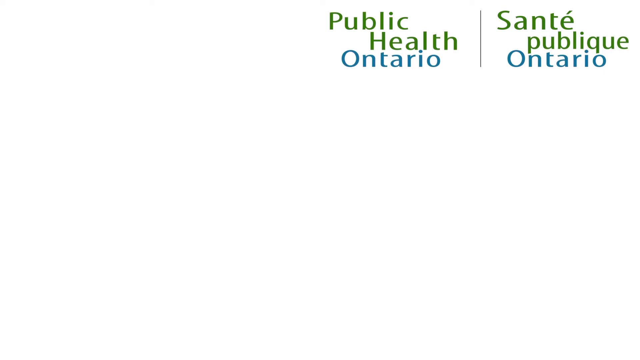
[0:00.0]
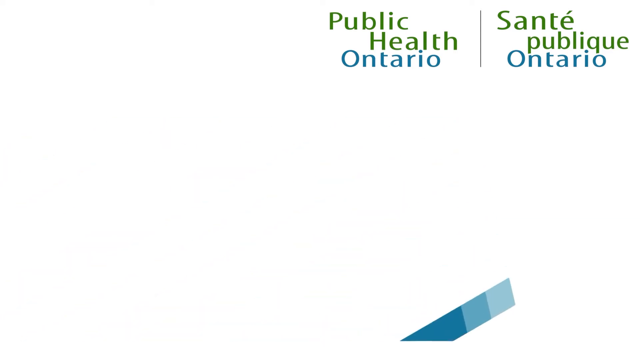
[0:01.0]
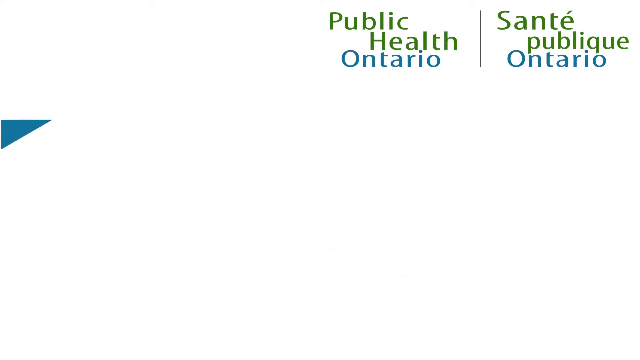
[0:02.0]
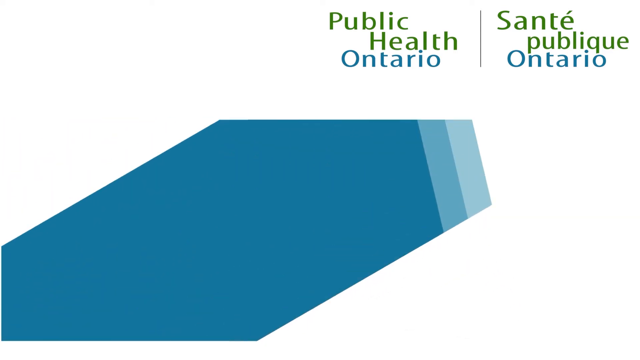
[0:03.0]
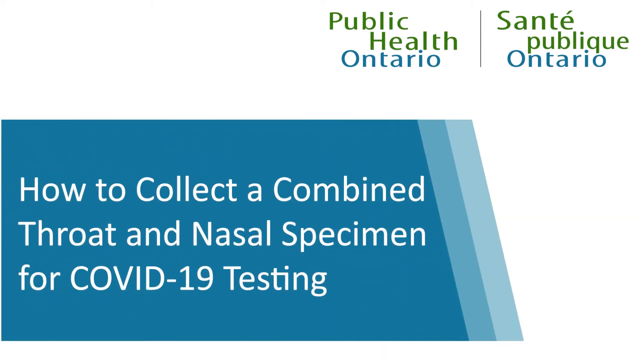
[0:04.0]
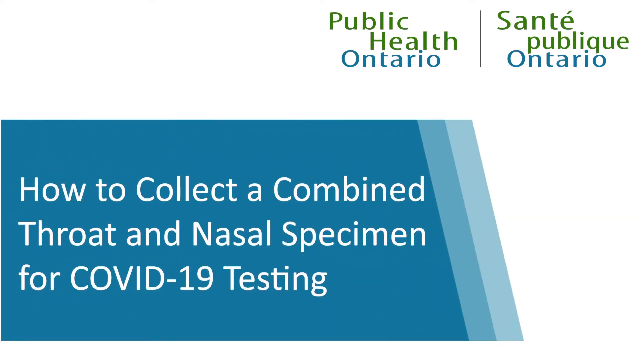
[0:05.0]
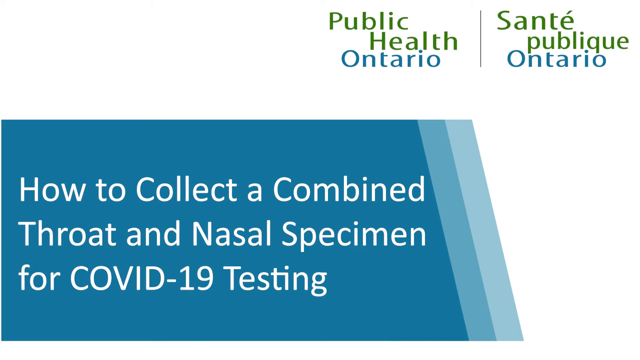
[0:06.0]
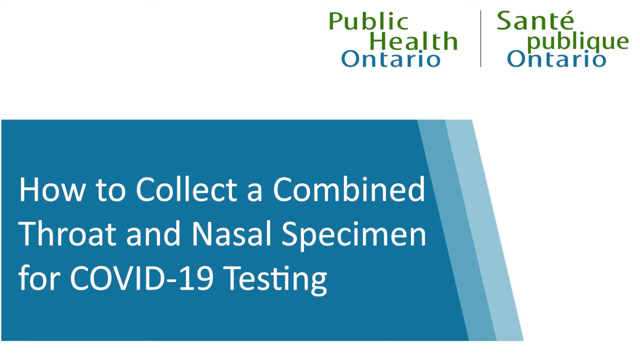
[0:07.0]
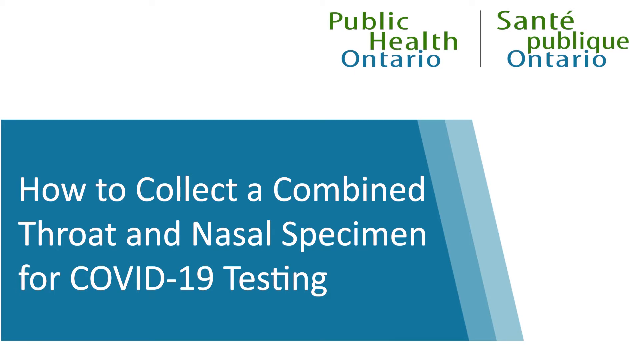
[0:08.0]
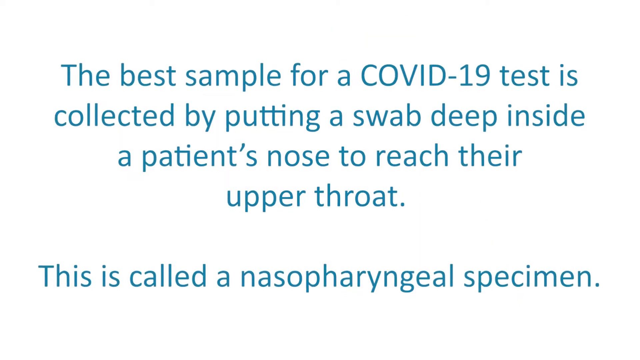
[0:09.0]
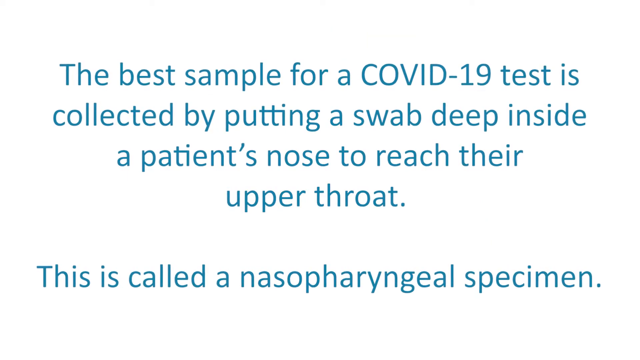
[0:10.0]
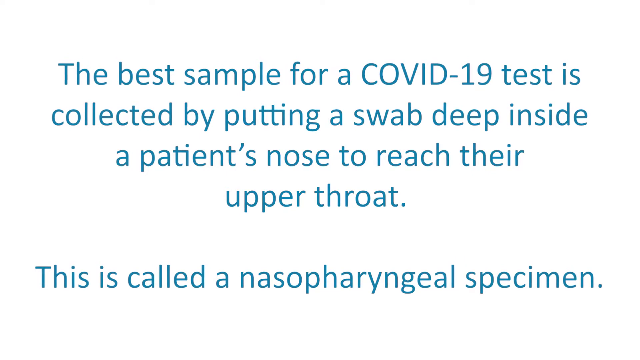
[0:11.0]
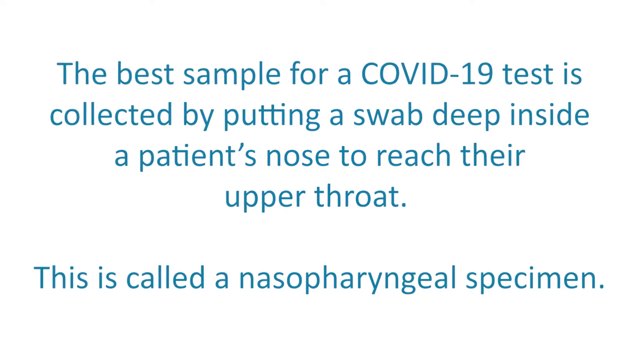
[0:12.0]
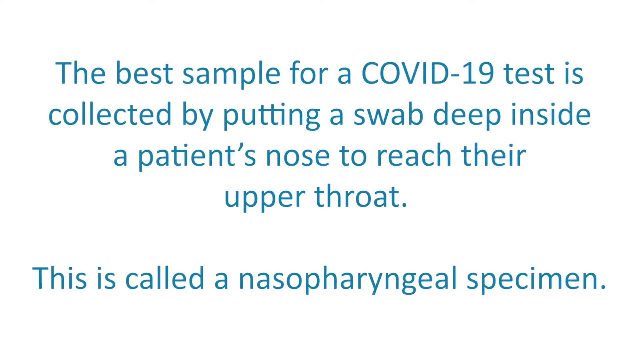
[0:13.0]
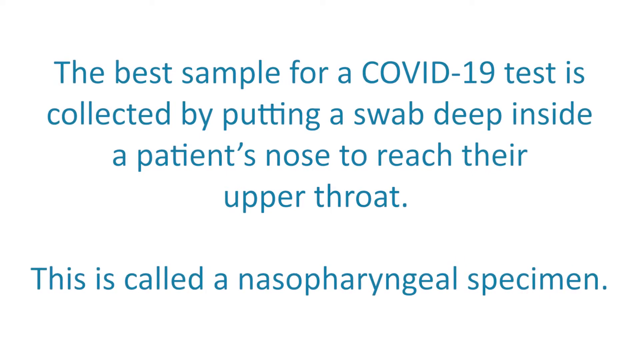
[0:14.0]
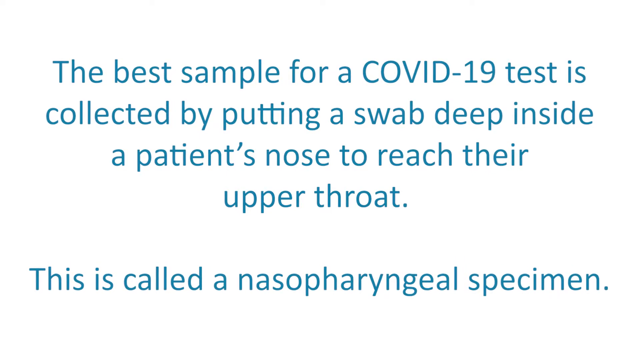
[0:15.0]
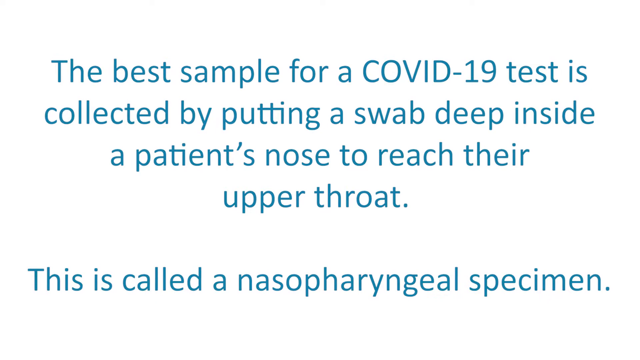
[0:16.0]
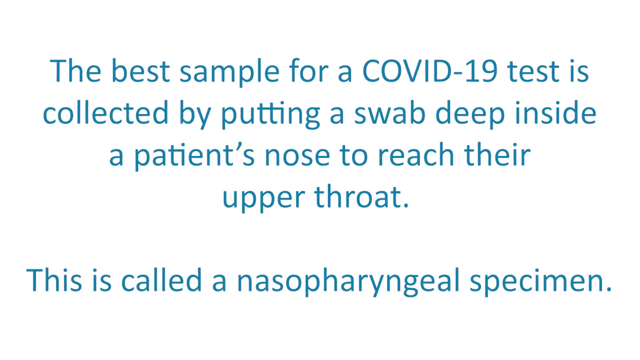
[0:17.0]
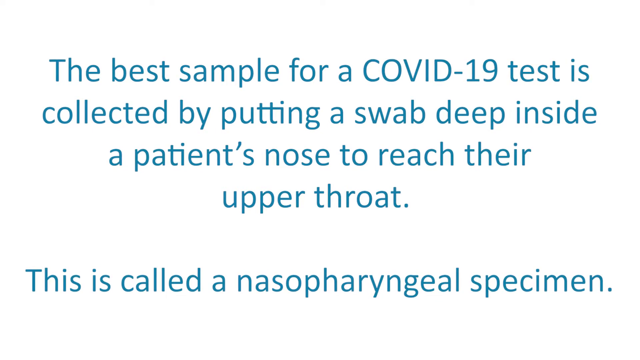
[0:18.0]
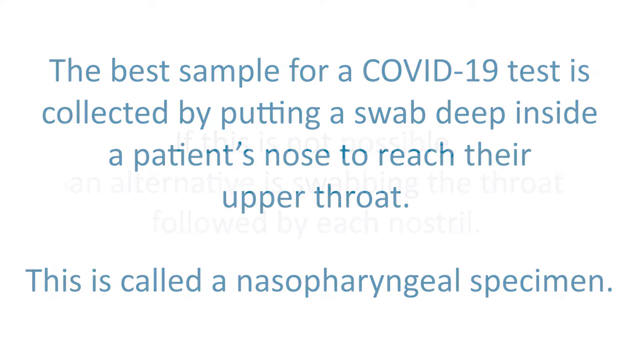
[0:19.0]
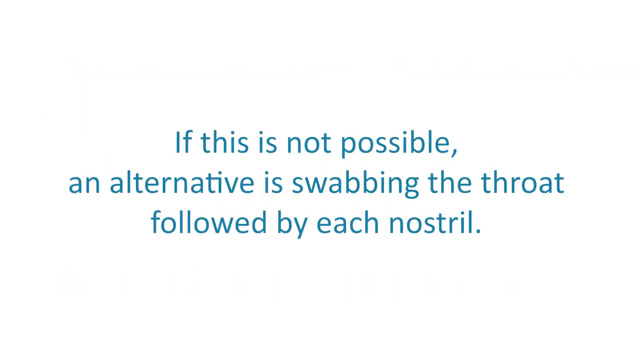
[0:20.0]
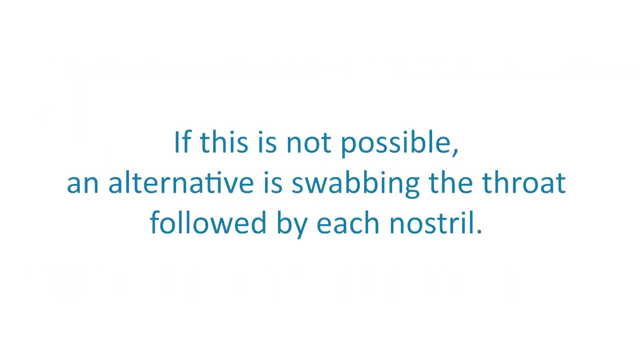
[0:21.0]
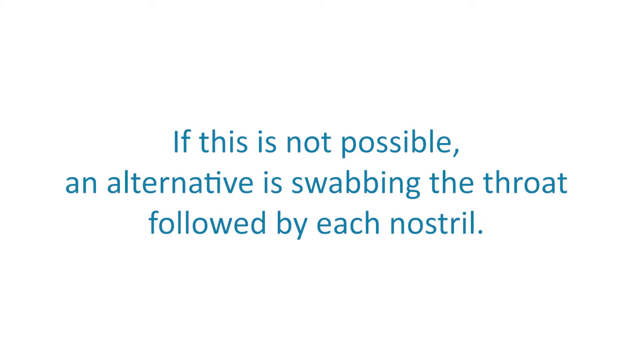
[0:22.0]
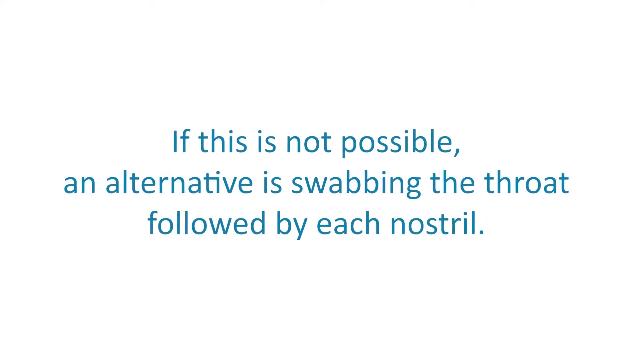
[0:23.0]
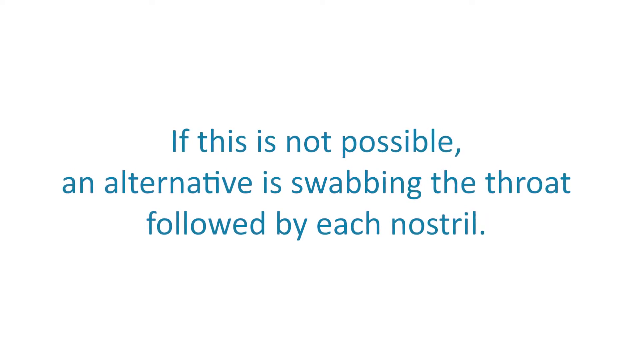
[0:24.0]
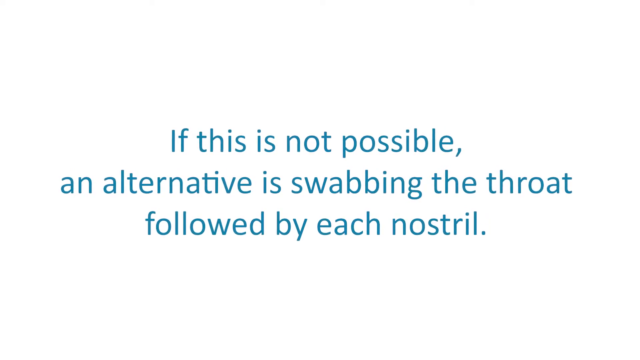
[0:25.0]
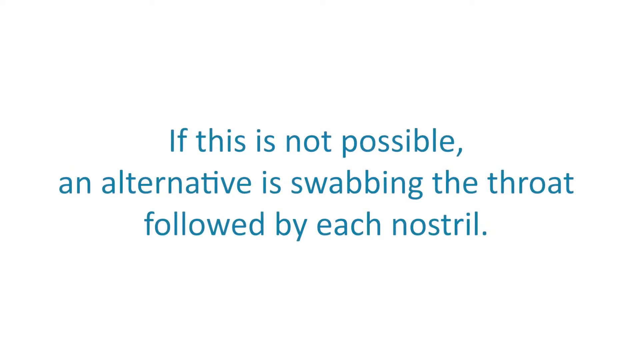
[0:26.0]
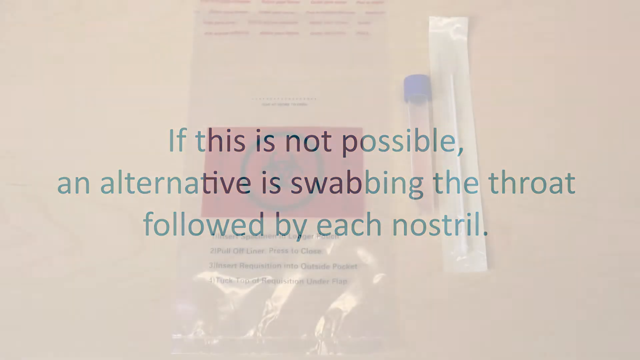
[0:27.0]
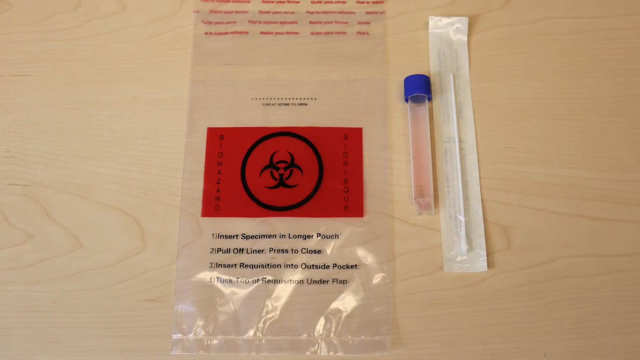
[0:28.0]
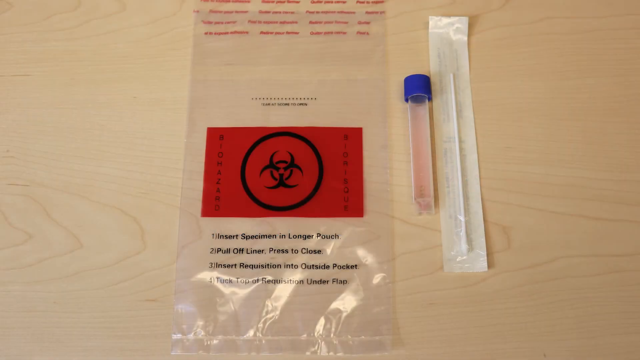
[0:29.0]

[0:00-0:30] The video opens with a logo in the upper right-hand corner that reads "Public Health Ontario," then a line in the middle, then "Santé Publique Ontario," in another language. An animation of blue lines leads to a light blue background with the text "How to collect a combined throat and nasal specimen for COVID-19 testing." Next, blue words on a white background read "the best sample for a COVID-19 test is collected by putting a swab deep inside a patient's nose to reach their upper throat. This is called a nasopharyngeal specimen." Another screen, also with blue letters on a white background, reads "if this is not possible, an alternative is swabbing the throat followed by each nostril." The scene then shows the top of a light brown wood grain table. On it is a specimen bag with a red label bearing the biohazard symbol in the middle, inside a circle. Beside the bag is a tube, and what looks like a long swab that is still closed. The bag carries instructions: it says "biohazard," and four numbered steps read "insert specimen in longer pouch," "pull off liner, press to close," "insert requisition into outside pocket," and "tuck top of requisition under flap." At the top, the bag apparently says "tear or rip to open."